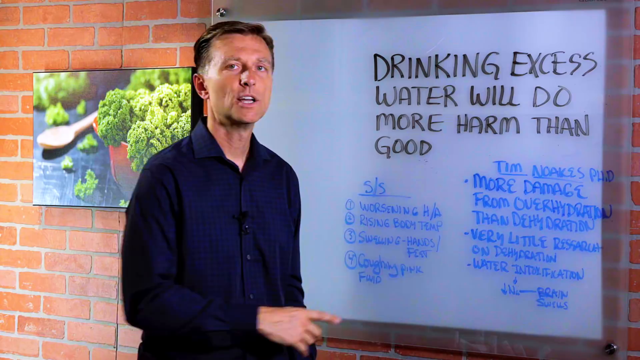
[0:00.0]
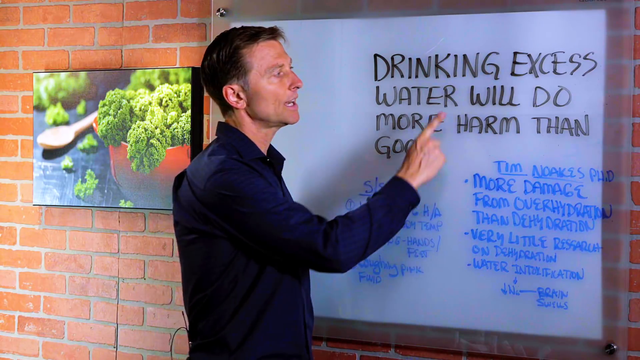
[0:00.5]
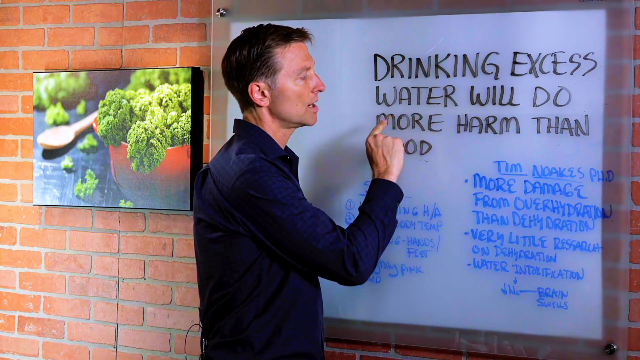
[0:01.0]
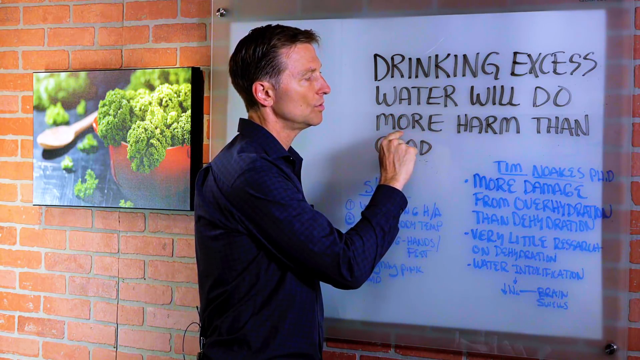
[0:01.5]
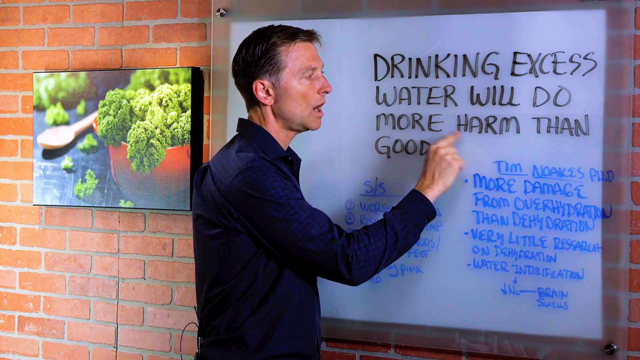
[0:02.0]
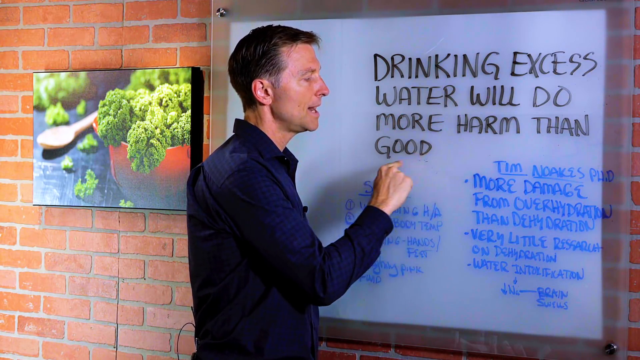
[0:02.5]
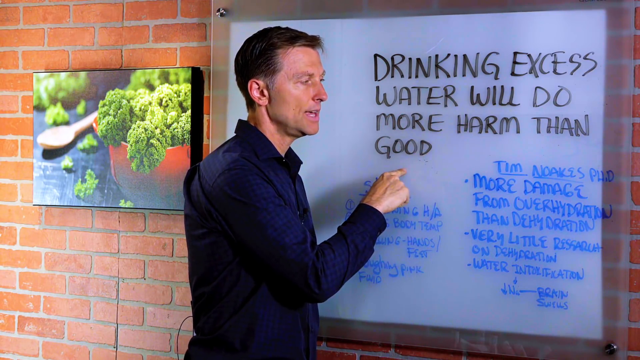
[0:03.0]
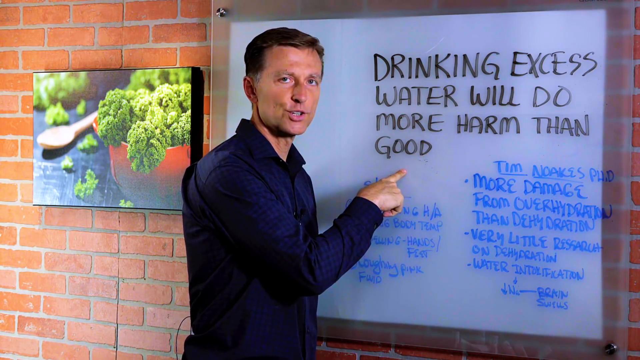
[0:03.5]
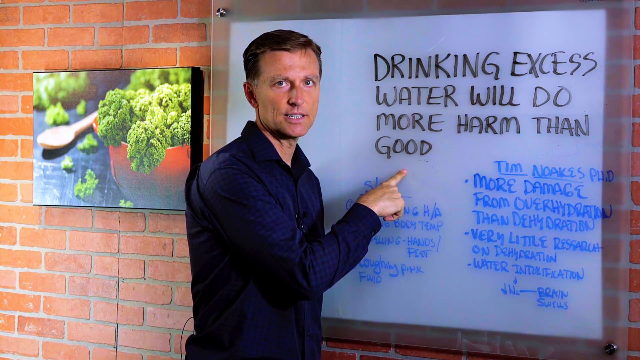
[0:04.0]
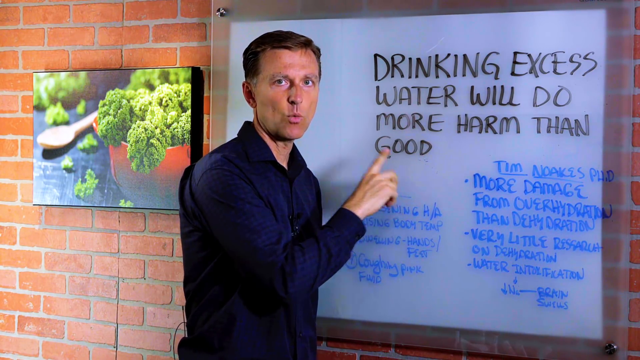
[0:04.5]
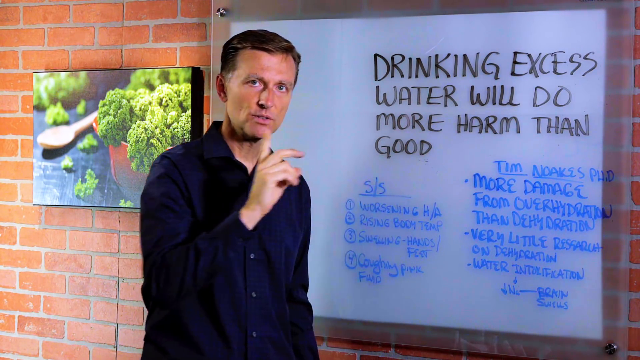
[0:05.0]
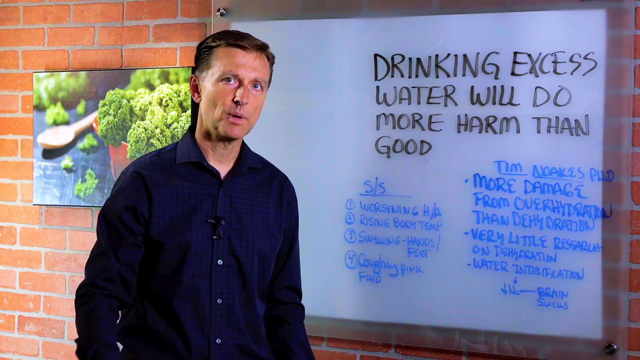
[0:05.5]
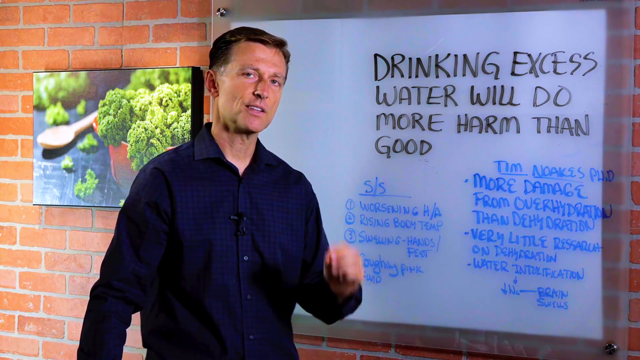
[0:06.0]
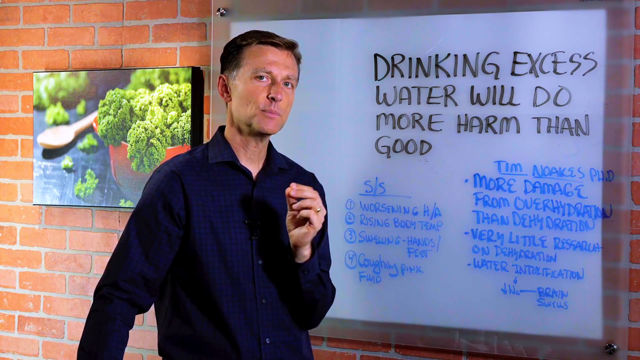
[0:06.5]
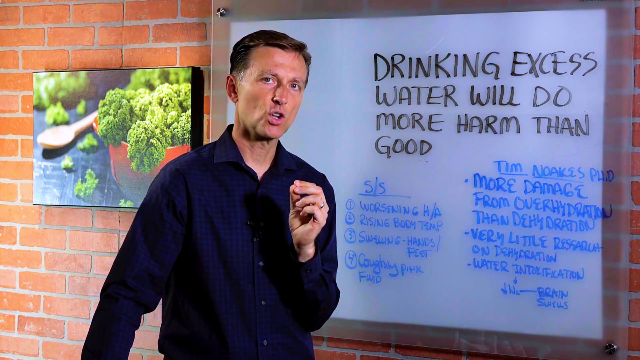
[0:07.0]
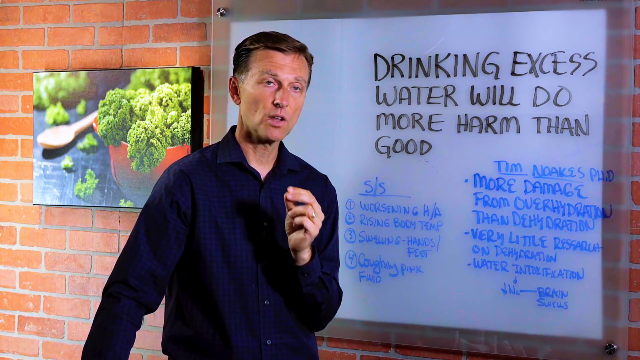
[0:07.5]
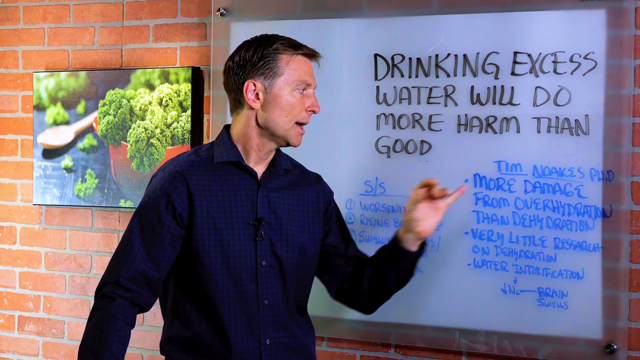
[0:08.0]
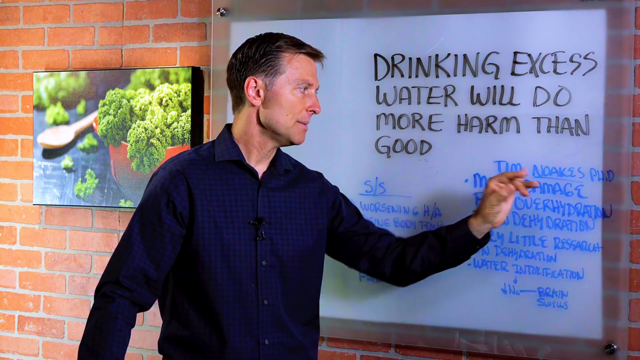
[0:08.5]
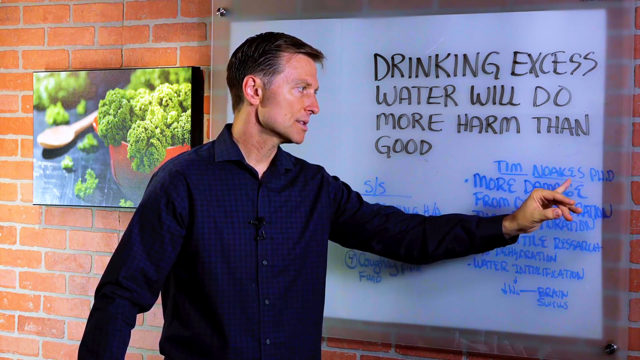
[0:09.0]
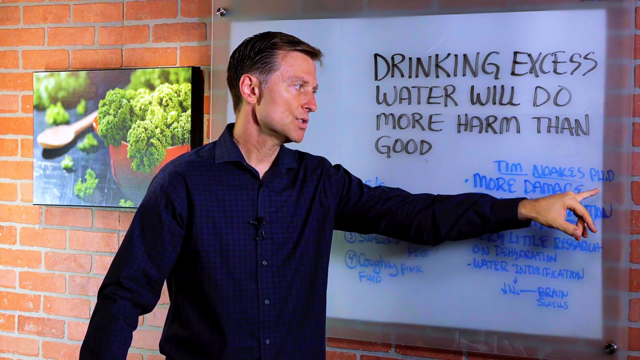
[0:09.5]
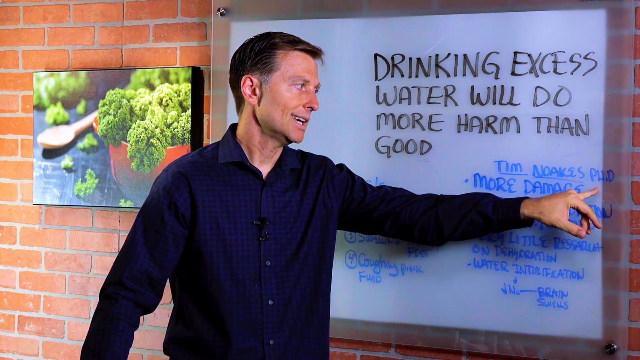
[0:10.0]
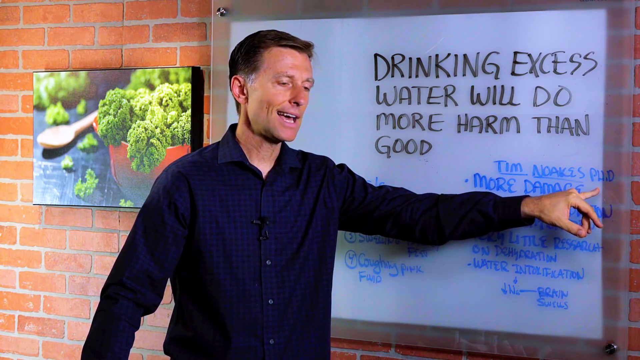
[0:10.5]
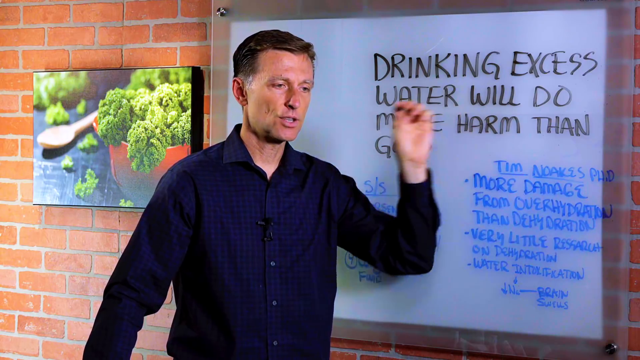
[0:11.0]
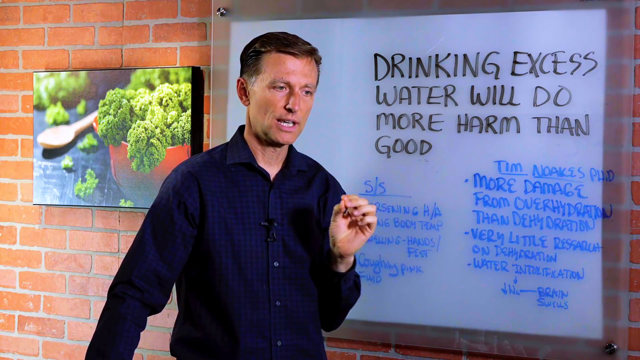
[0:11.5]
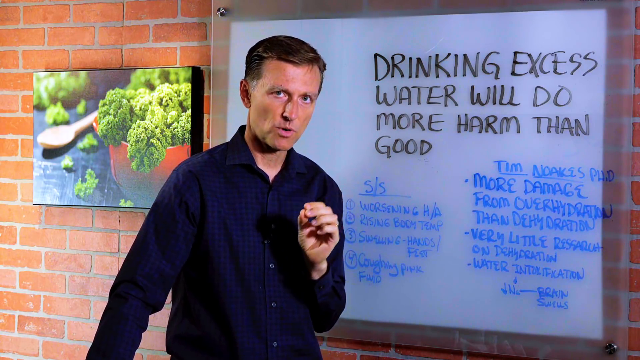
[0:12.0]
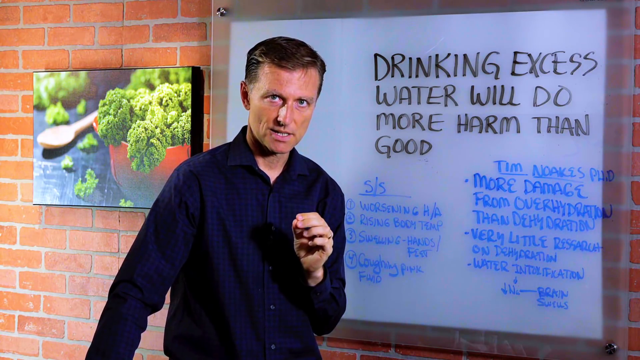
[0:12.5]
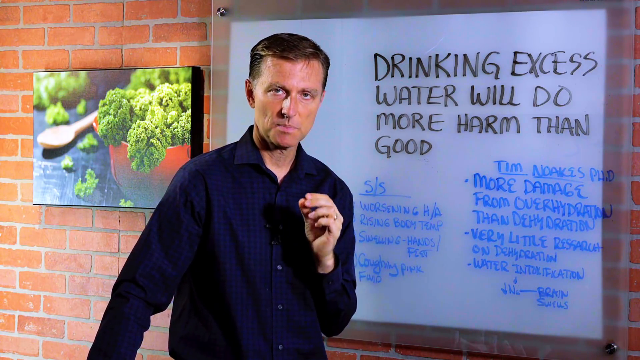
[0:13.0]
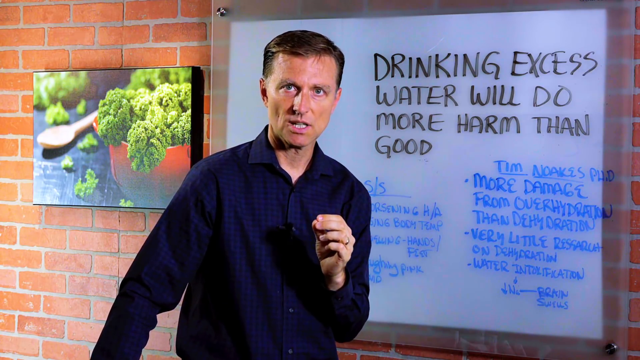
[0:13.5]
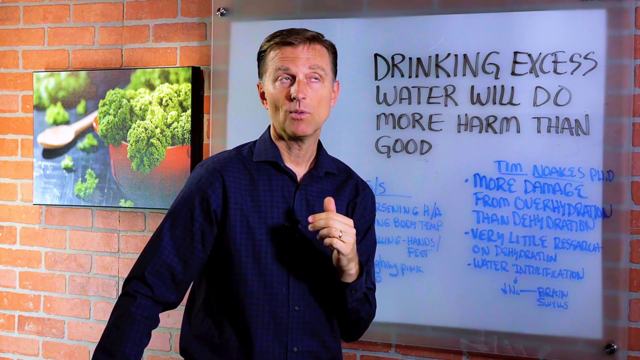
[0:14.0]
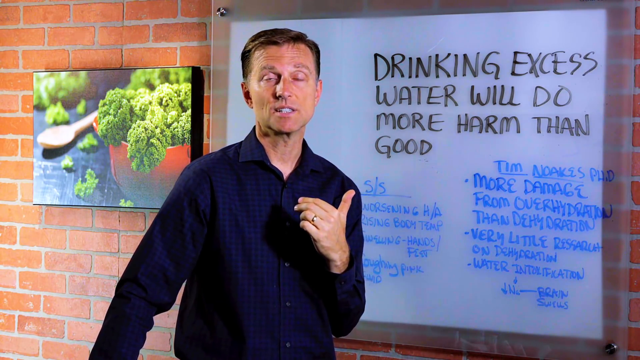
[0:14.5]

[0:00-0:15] A Caucasian man who looks to be in his late 40s stands in front of a whiteboard mounted on a brownish-reddish brick wall. He wears a blue button-down shirt with a collar. At the top of the whiteboard, in black capital letters, it reads "DRINKING EXCESS WATER WILL DO MORE HARM THAN GOOD." Beneath it are two columns of smaller words written in blue. The left column is labeled "S/S" and has four numbered points: "WORSENING H/A," "RISING BODY TEMP," "SWELLING HANDS/FEET," and "COUGHING PINK FLUID." The right column has bullet points under the label "Tim Noakes PHD": "MORE DAMAGE FROM OVERHYDRATION THAN DEHYDRATION," "VERY LITTLE RESULT ON DEHYDRATION," and "WATER INTOXIFICATION." Below that is a downward-pointing arrow with "NO-BRAIN SWELLS." On the wall to the man's left is a picture that looks like a close-up photograph of a table with a bowl of broccoli: a white or red bowl or cup with broccoli overflowing it, a brown wooden spoon next to the bowl, and some broccoli leaves on the table. The man reads the whiteboard, going over the different points.